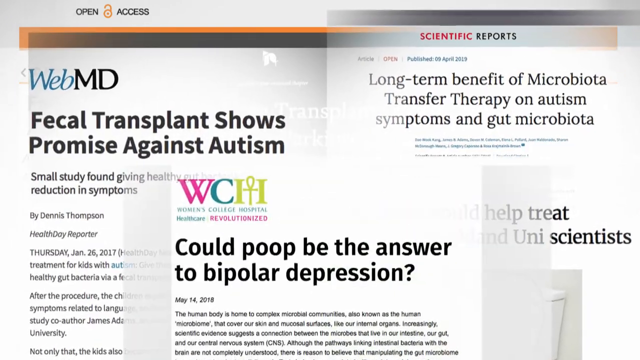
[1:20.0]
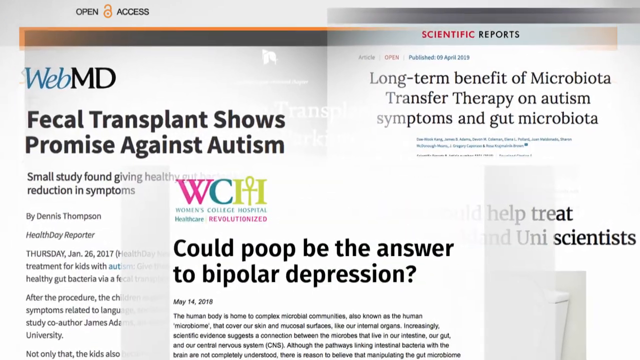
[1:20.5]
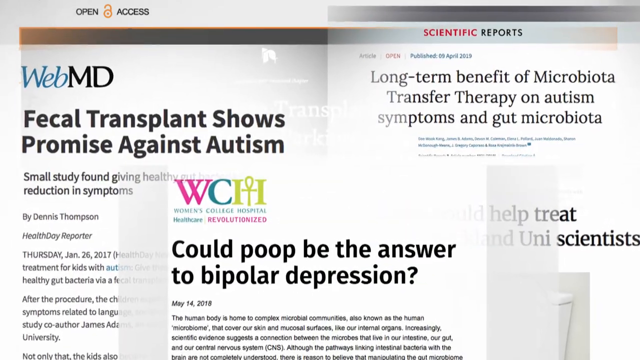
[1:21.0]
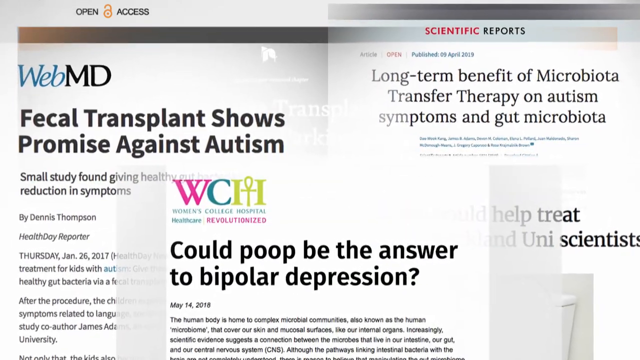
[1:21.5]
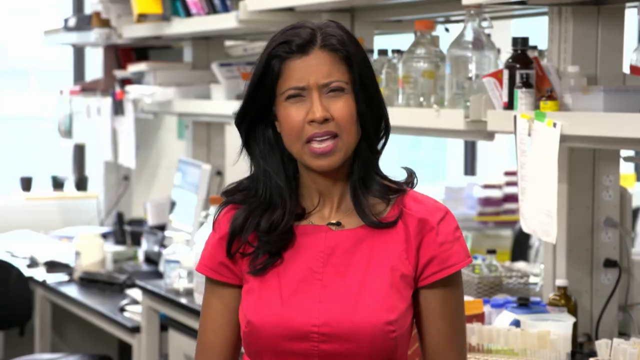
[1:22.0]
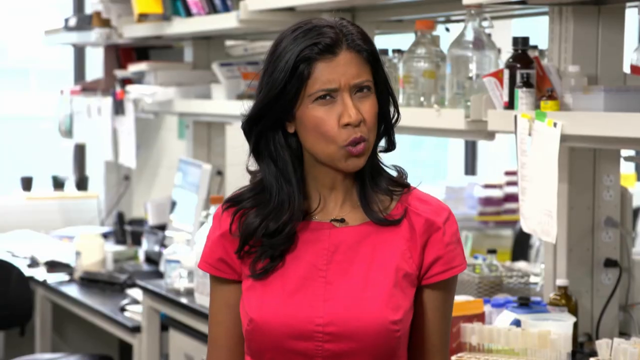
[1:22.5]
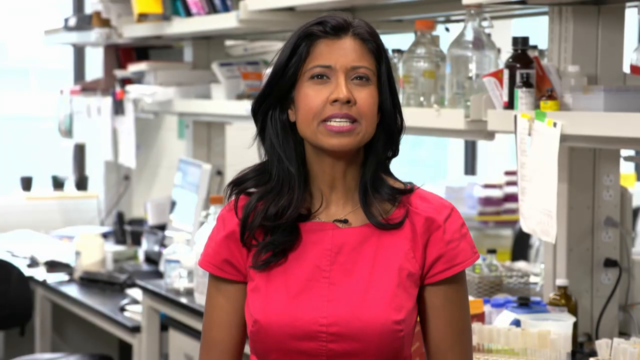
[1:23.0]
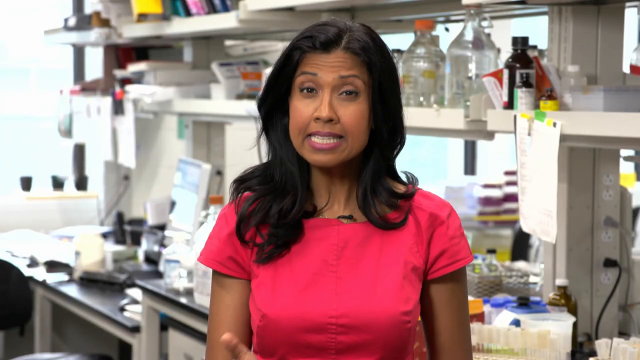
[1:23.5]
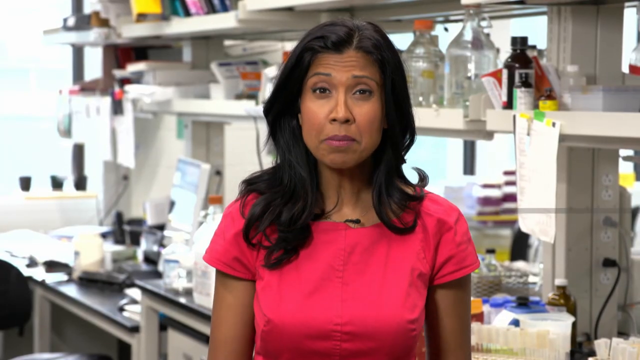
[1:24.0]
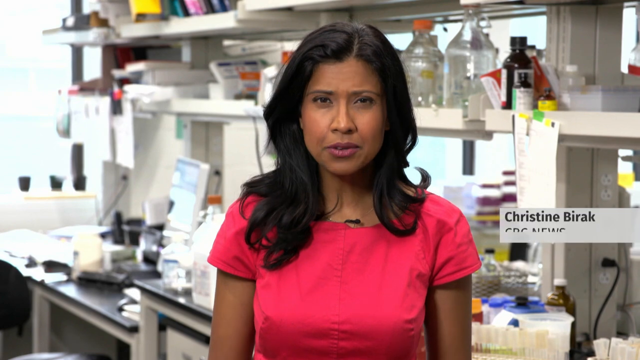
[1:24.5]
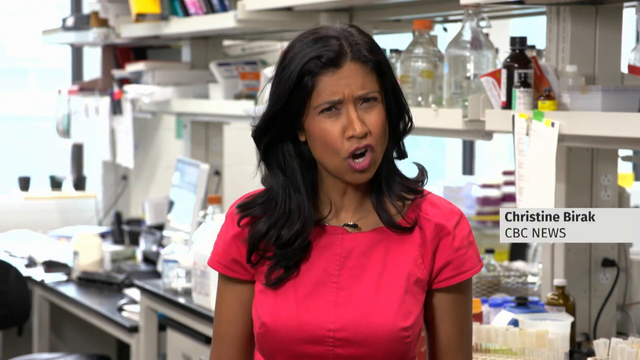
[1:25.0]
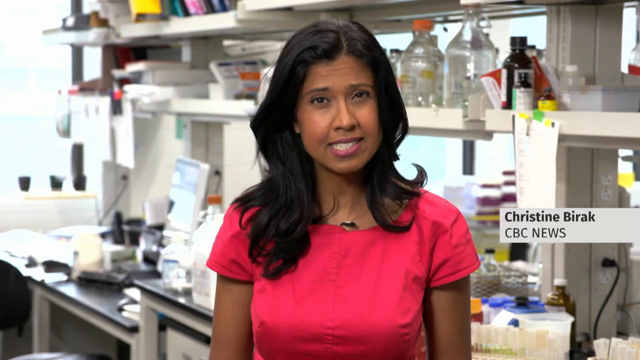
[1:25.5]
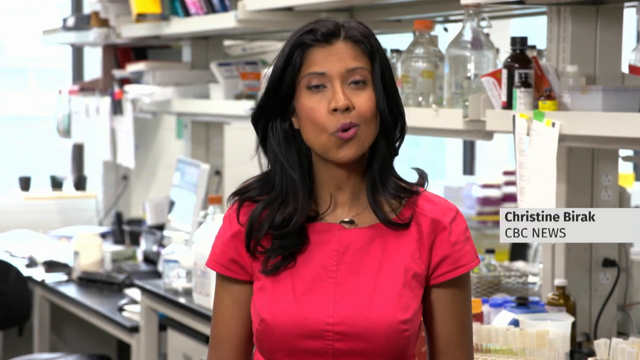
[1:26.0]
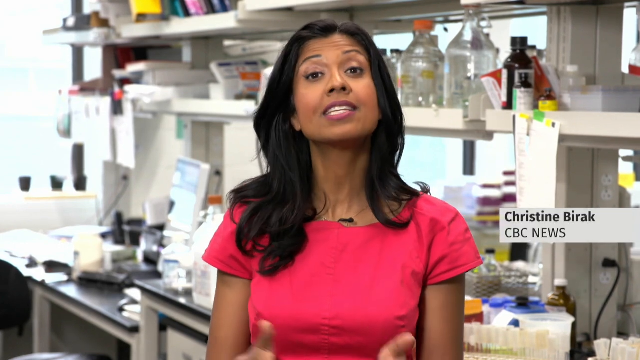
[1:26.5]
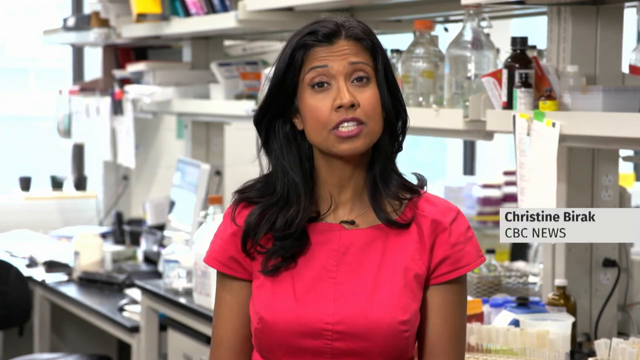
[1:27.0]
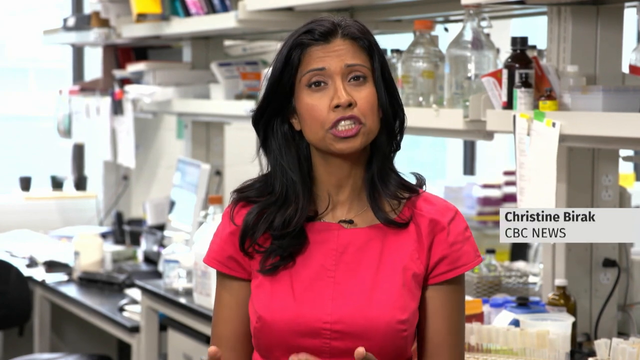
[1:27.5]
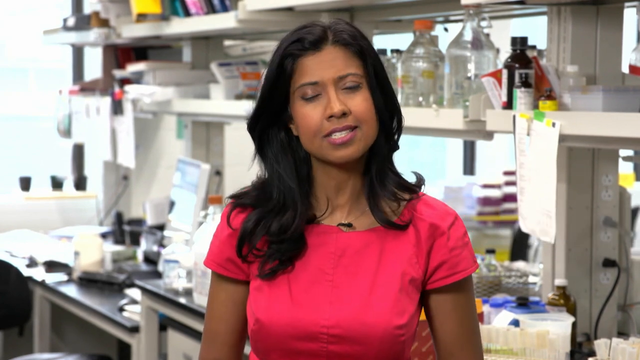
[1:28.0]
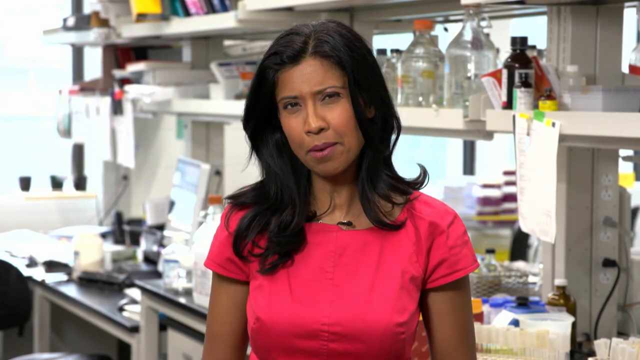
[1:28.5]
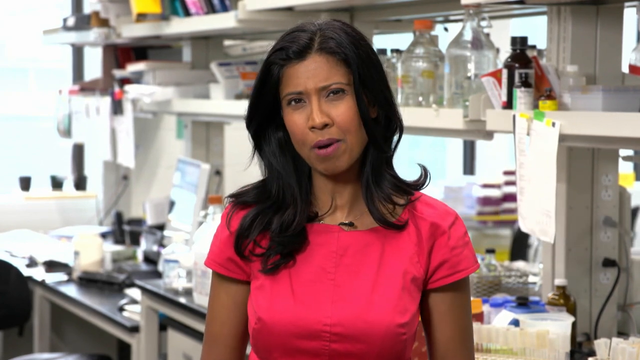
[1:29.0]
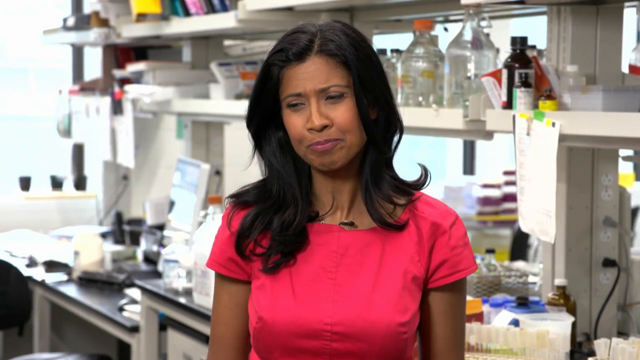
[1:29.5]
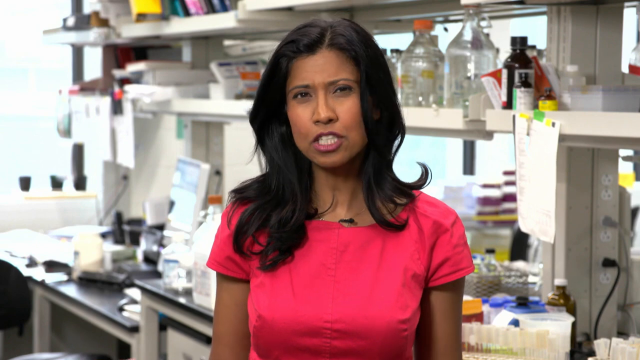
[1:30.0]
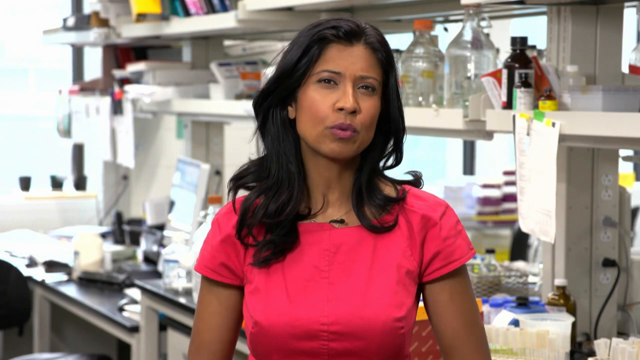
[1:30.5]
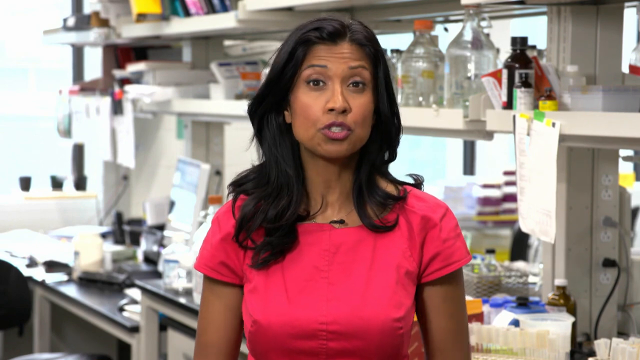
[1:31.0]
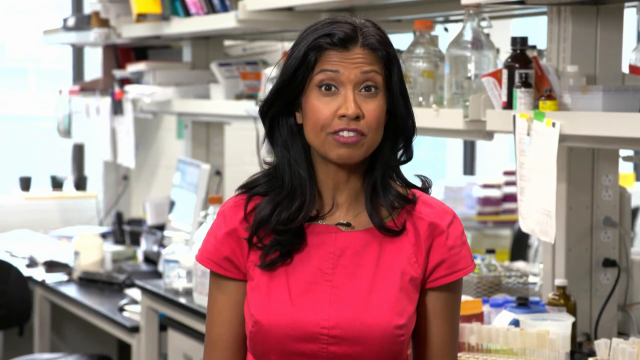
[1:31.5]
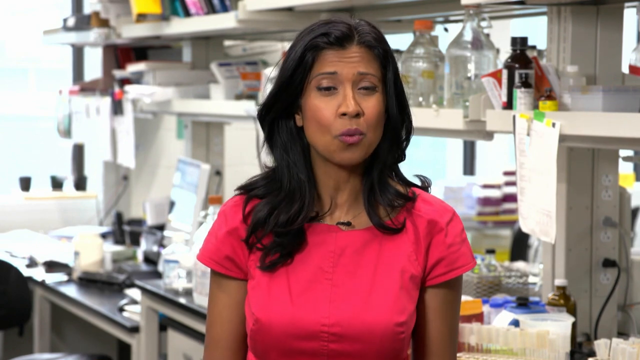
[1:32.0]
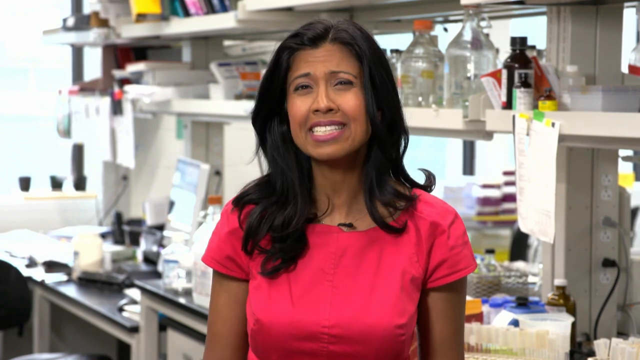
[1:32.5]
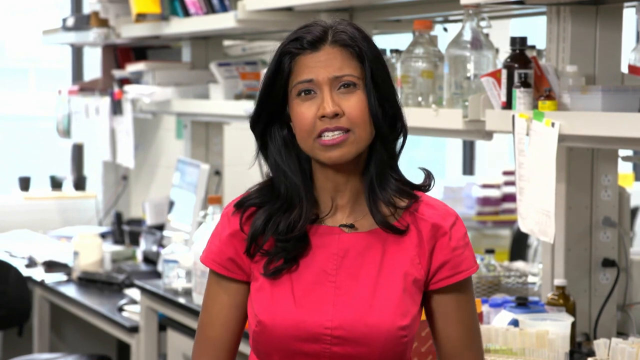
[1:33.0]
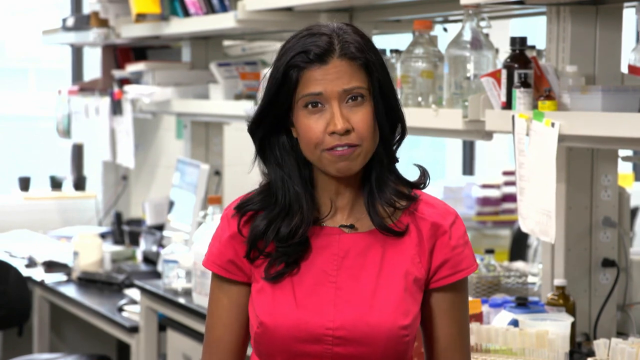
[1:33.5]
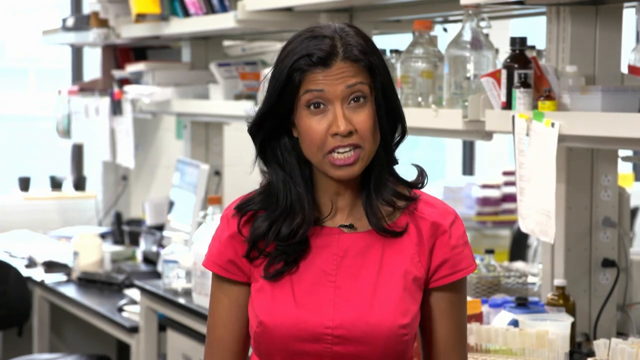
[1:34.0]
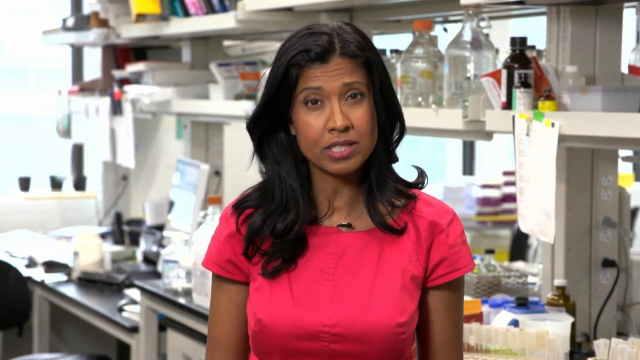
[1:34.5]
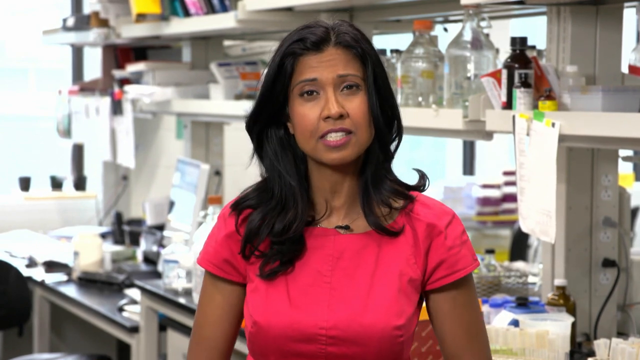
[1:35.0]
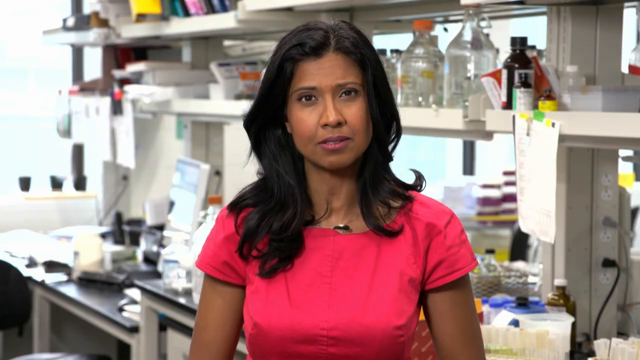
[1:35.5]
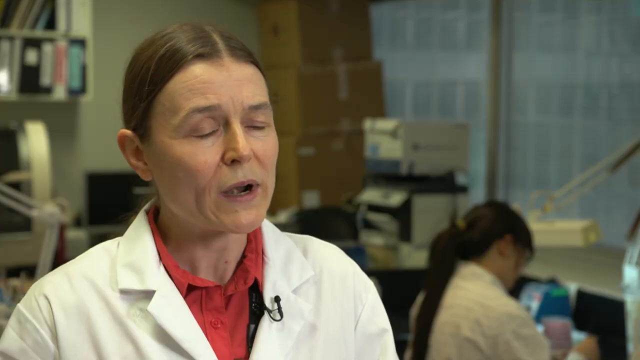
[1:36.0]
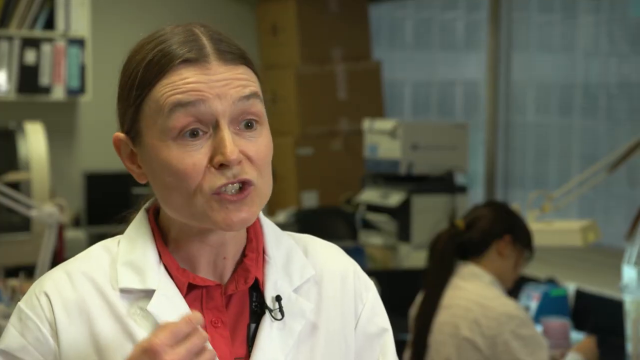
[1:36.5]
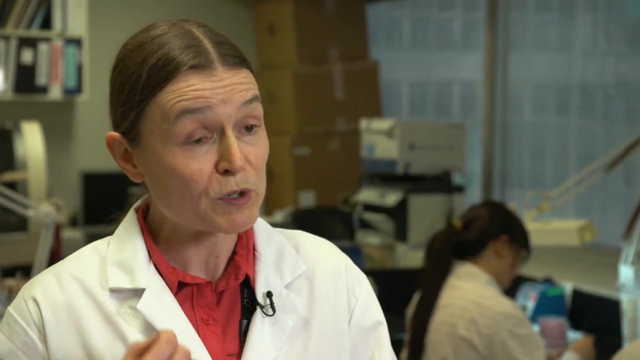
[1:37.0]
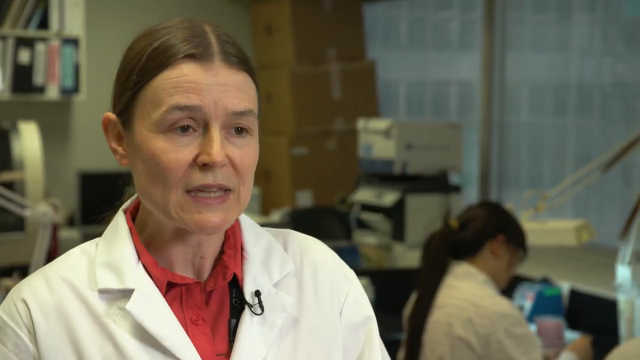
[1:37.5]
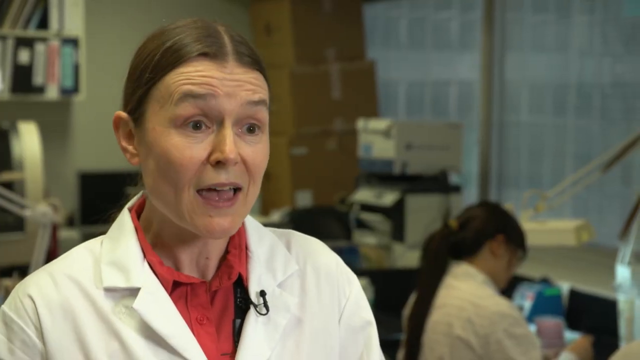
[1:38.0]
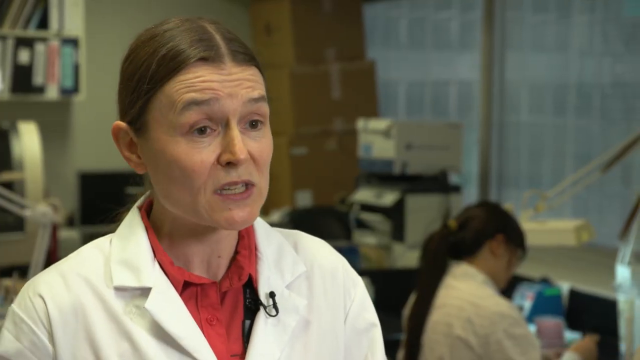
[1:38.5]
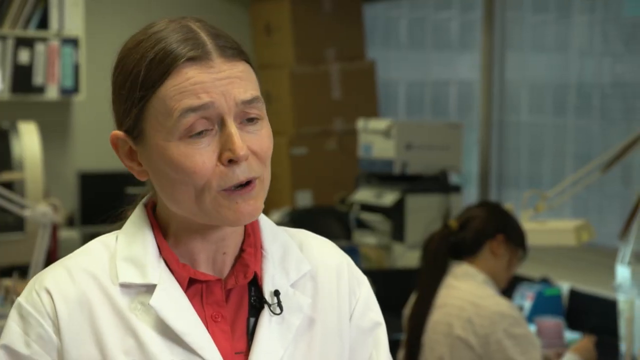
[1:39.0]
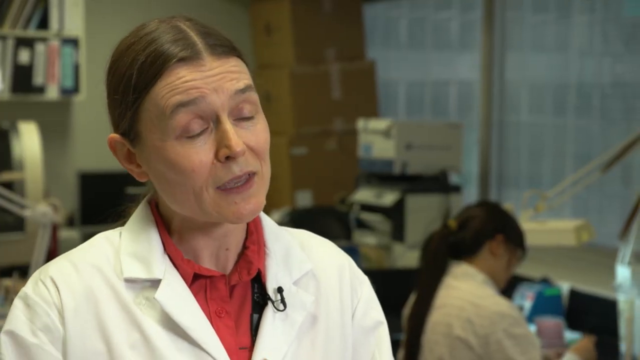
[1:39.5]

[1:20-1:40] Several white articles with black text from different journals are layered on top of each other, all about similar studies of microbiota transfer therapy and fecal transplant in relation to things like autism, depression and similar topics. The video then shows what looks like a journalist or reporter with long brown hair, wearing a pink top with a mic attached to the collar, talking to the camera in some kind of medical lab. A white text box appears on the right side of the screen reading "Christine Barak, CBC News". She talks and nods to the camera; occasionally both her hands flick up at the same time, palms facing inwards, and she tilts her head slightly to the right, occasionally shakes her head, and raises her eyebrows as she talks. Next is the doctor in the pink shirt and white doctor's outfit, with the microphone on her left collar and the scientist with long brown hair in the white coat in the background on her right; she looks off to the left, talking to the interviewer. The video cuts back to the articles and then back to the reporter, Christine Barak, in the same position, talking directly to the camera, nodding her head several times, moving her hands expressively at the bottom of the screen, tilting her head to the right and then back to the left, with very expressive facial expressions. It then cuts back to the doctor in the pink shirt.